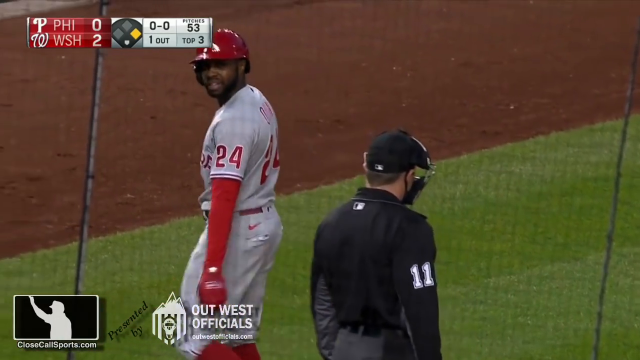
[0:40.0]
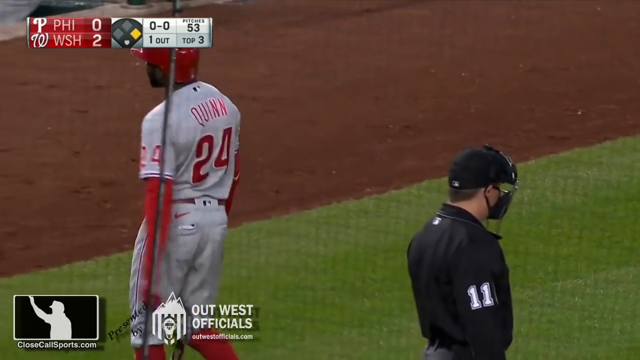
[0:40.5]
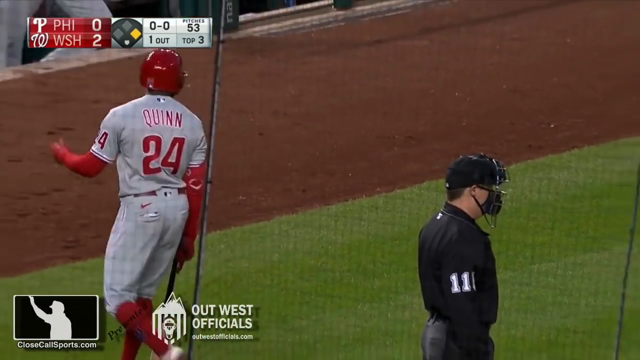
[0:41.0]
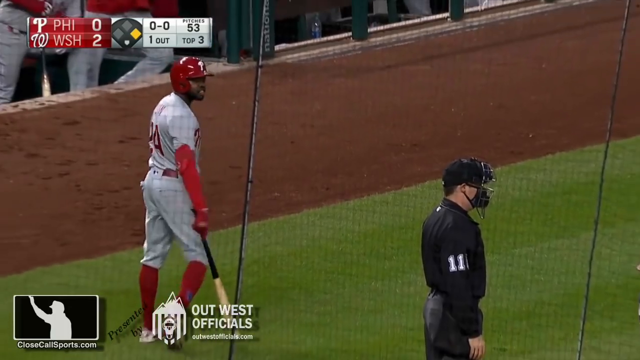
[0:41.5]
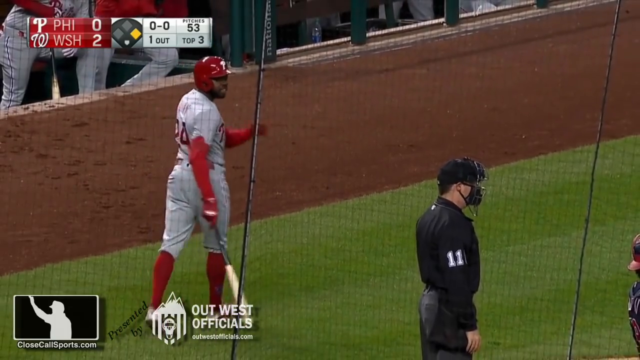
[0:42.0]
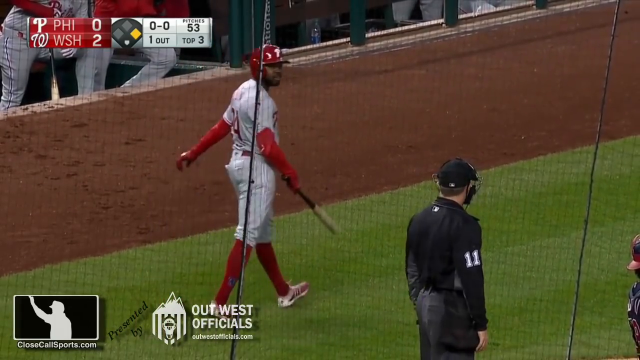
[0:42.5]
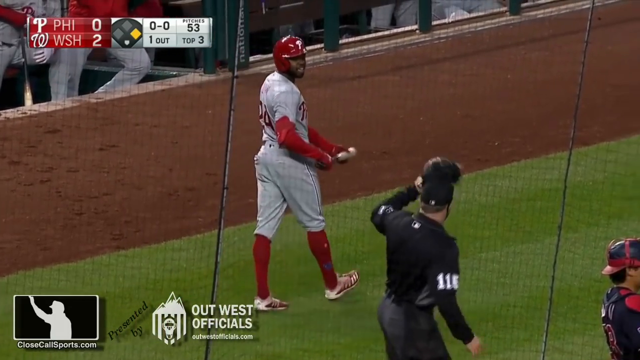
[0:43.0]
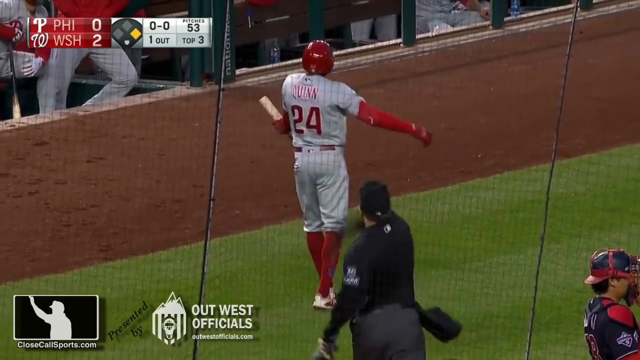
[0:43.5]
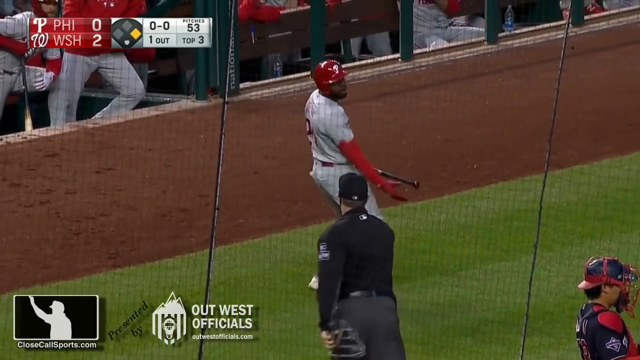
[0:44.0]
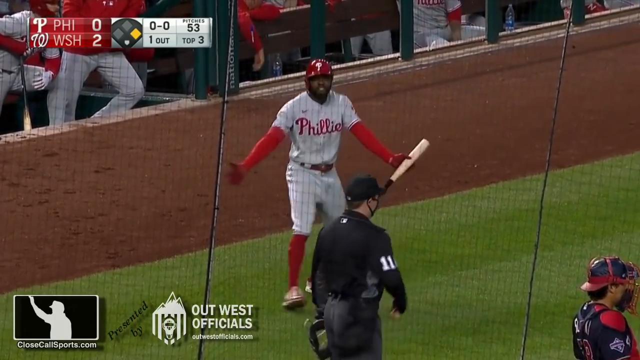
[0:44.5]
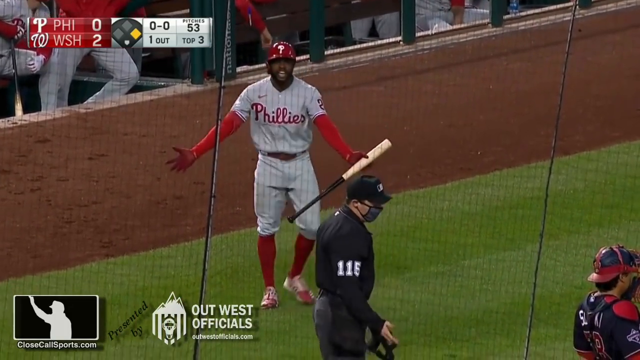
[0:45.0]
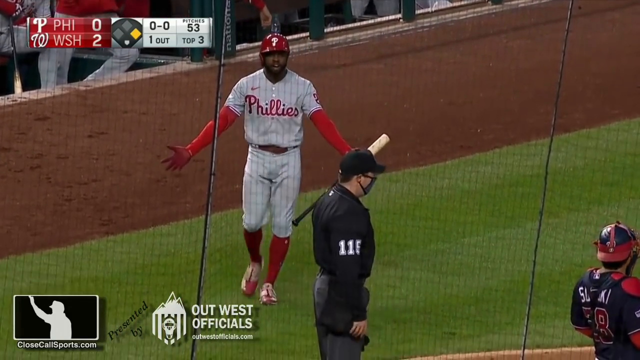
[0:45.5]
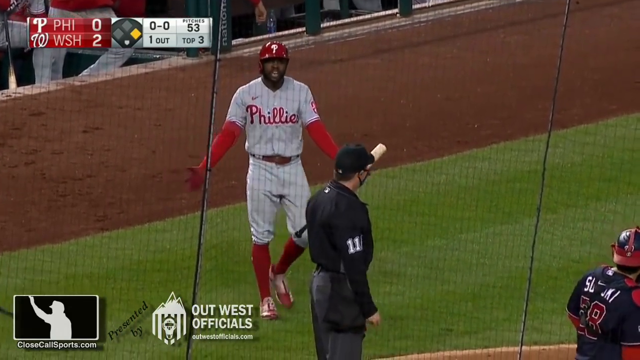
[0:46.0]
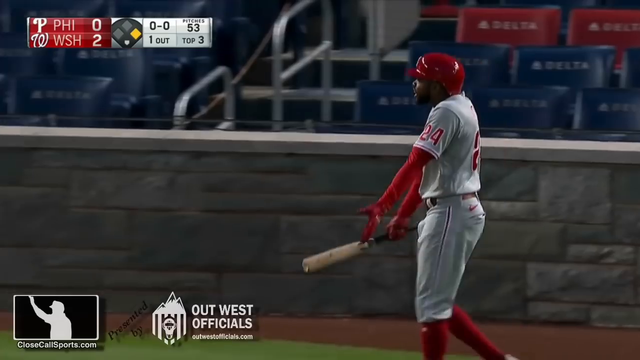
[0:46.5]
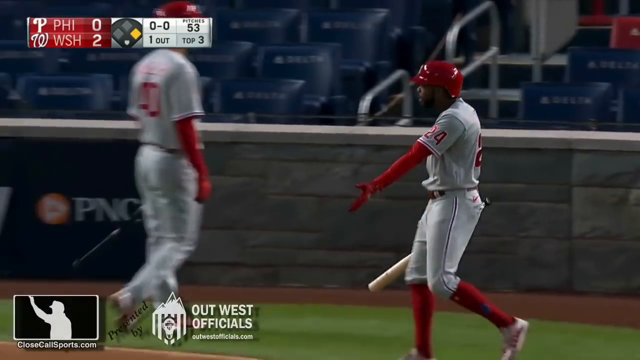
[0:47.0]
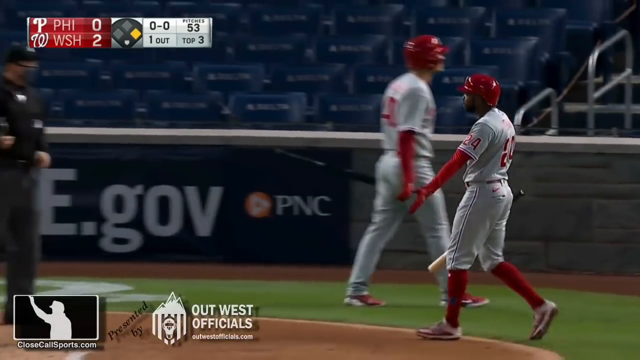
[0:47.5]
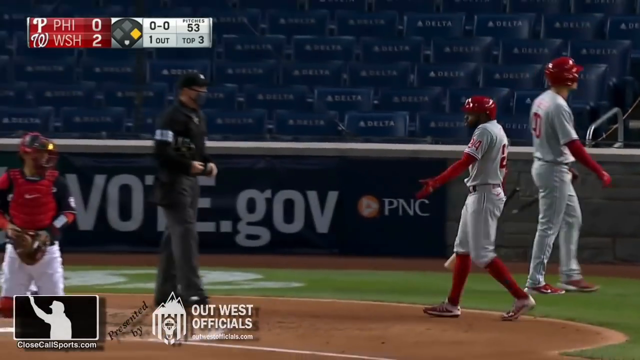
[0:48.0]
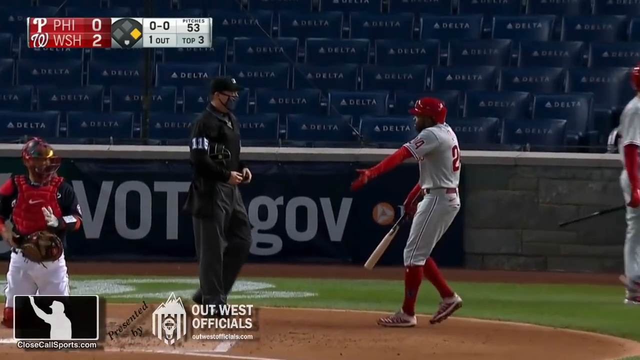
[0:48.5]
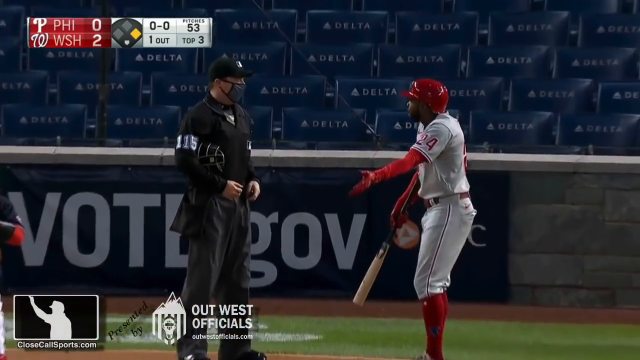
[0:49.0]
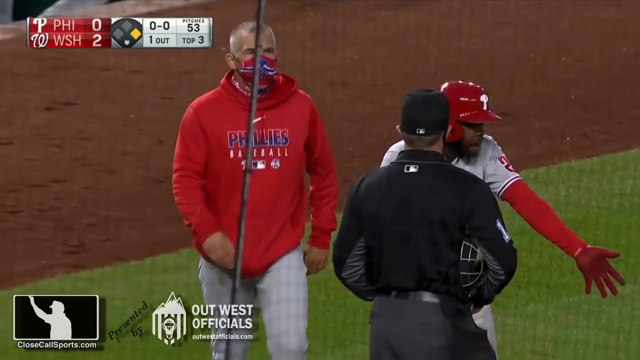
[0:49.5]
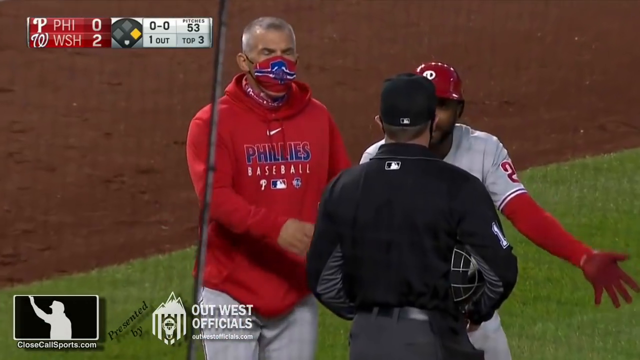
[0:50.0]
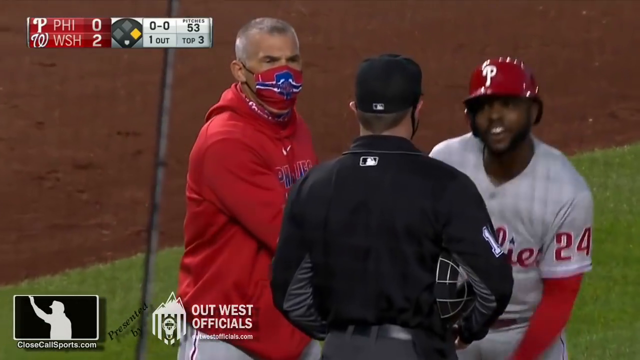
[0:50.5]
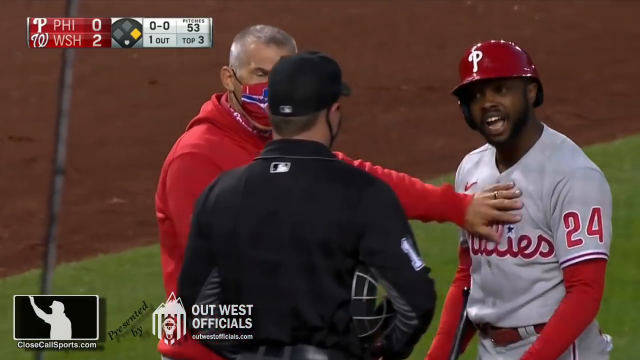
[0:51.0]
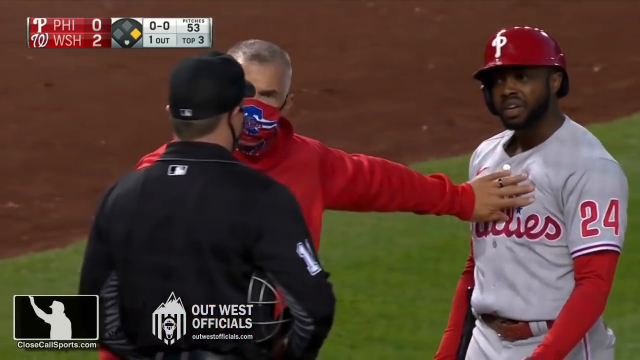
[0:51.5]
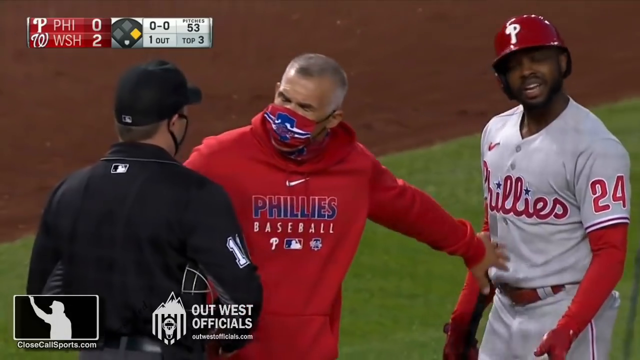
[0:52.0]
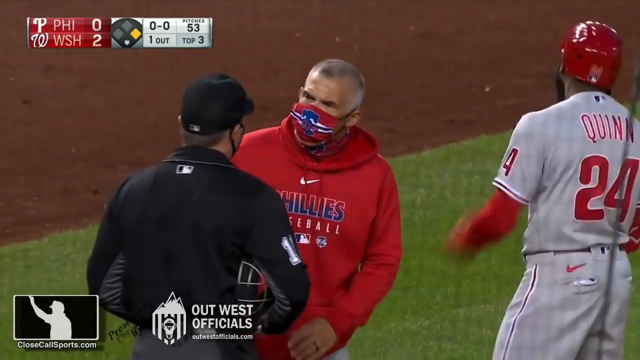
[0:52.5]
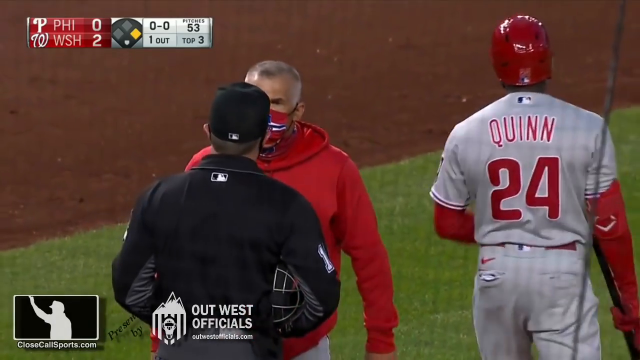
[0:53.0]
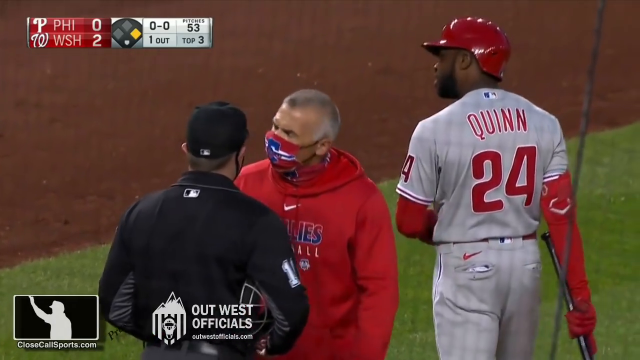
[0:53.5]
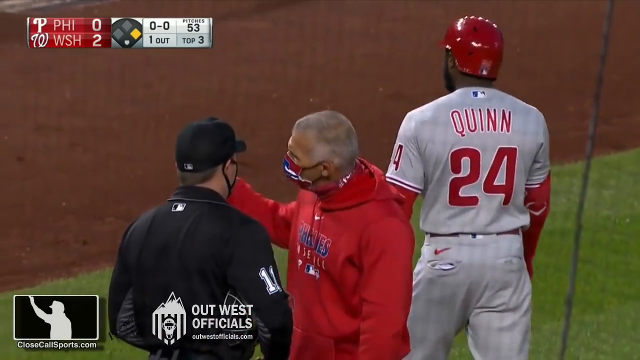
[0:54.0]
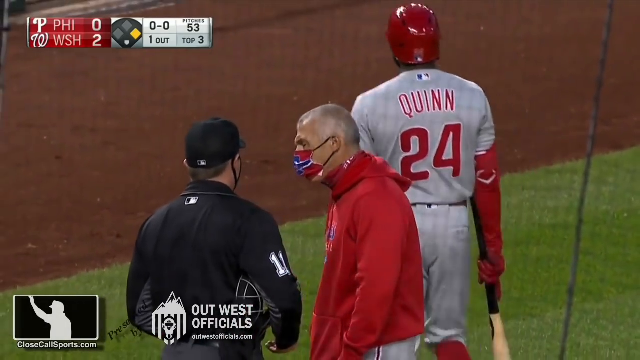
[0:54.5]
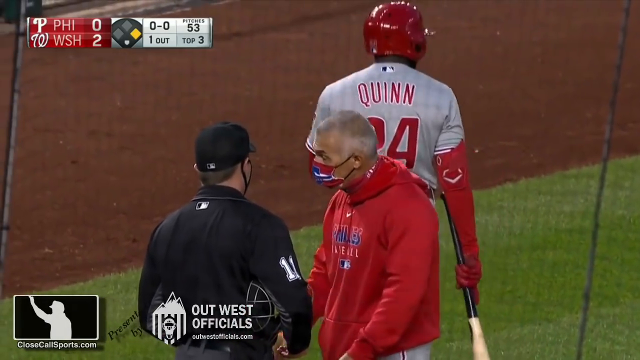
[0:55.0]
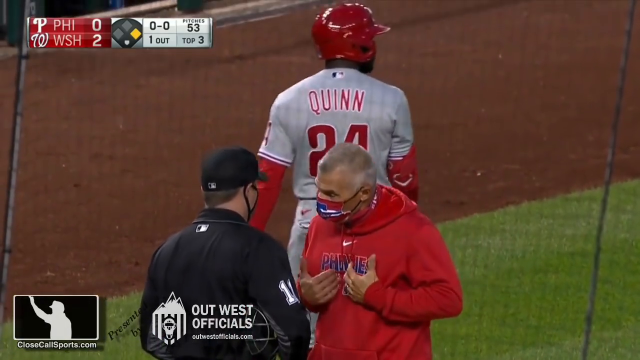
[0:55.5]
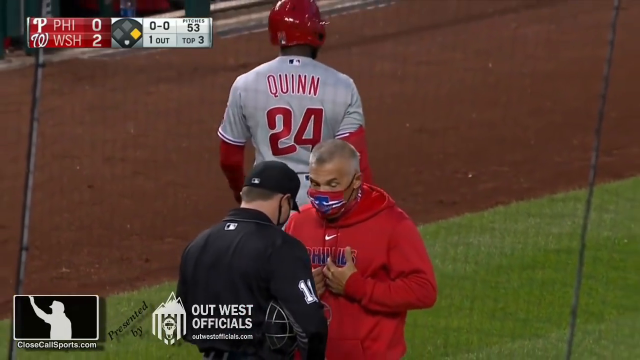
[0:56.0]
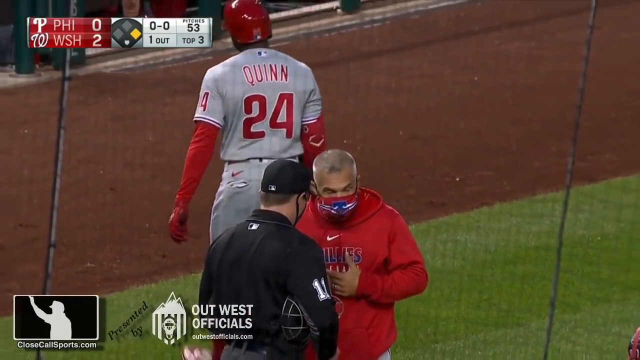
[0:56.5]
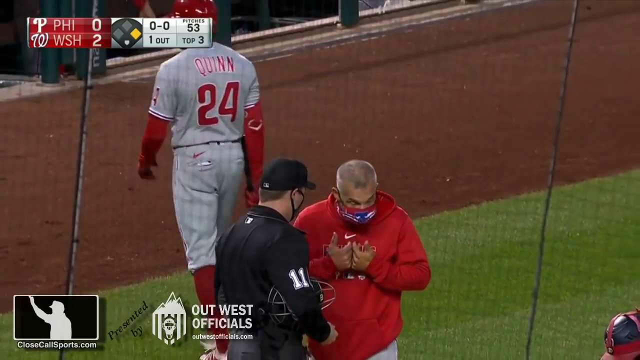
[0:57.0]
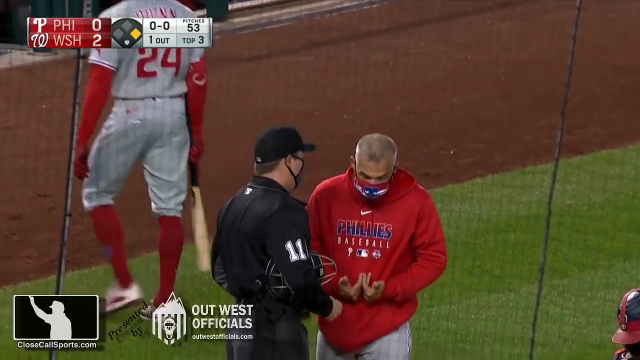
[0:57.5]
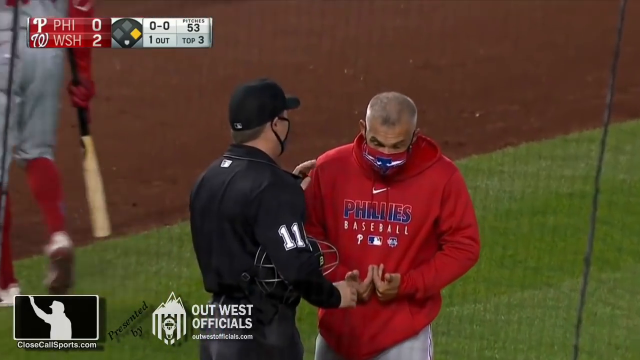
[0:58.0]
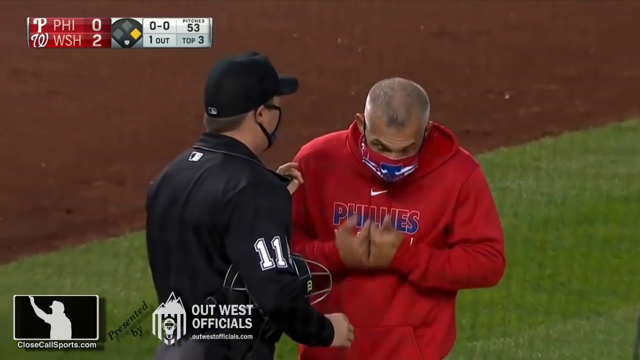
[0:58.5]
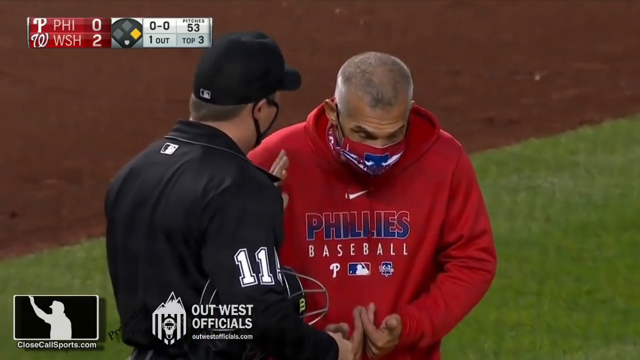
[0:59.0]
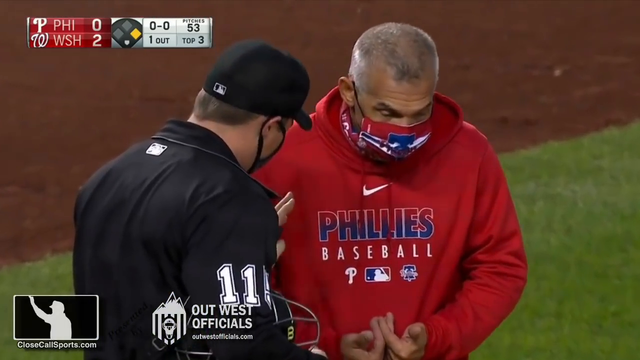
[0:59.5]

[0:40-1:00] The batter, number 24 for the Phillies, is upset about a call and talks to the umpire. A coach wearing a mask comes out and argues with the umpire as well, and both seem pretty upset. The back of the batter's shirt says "Quinn" as he walks away. He wears a gray baseball uniform with red stripes that says "Phillies". The coach's sweatshirt is red and also says "Phillies". The umpire wears a mask, is dressed mostly in black, and has a black baseball cap.